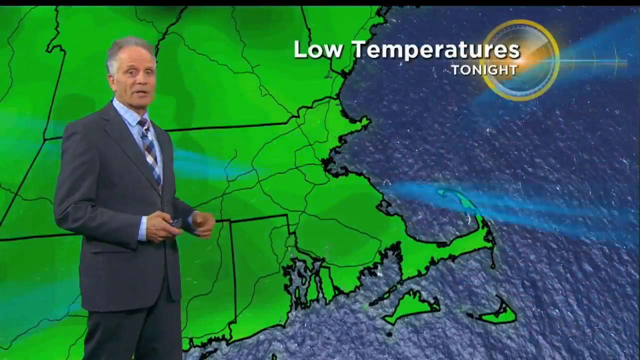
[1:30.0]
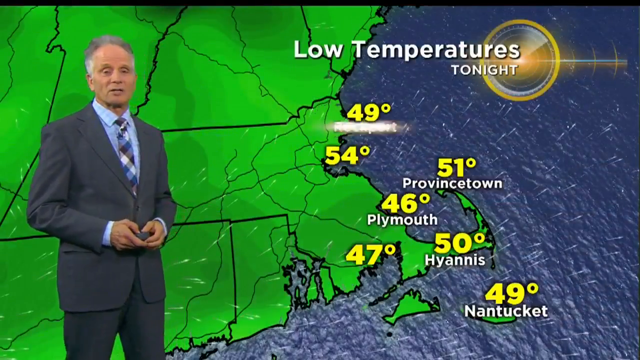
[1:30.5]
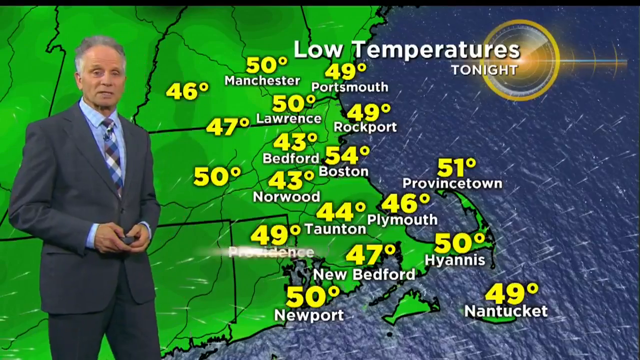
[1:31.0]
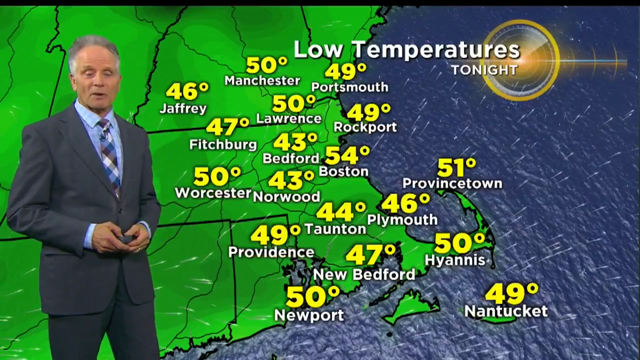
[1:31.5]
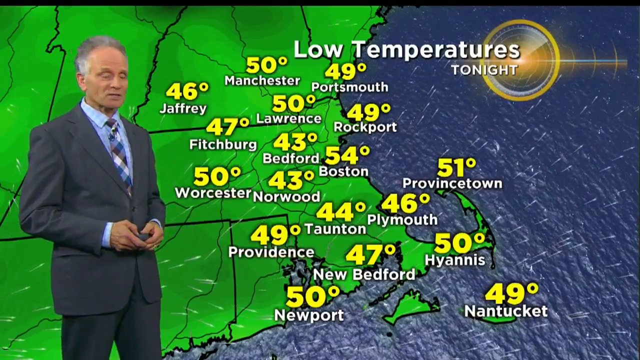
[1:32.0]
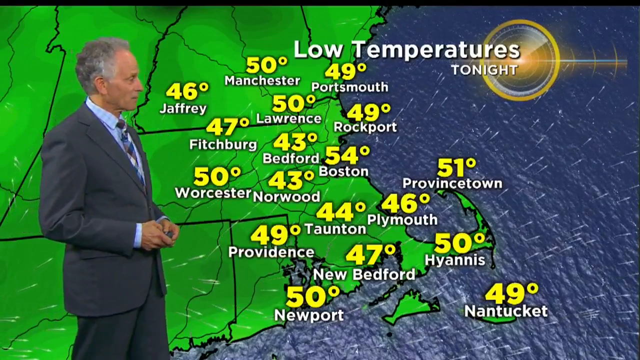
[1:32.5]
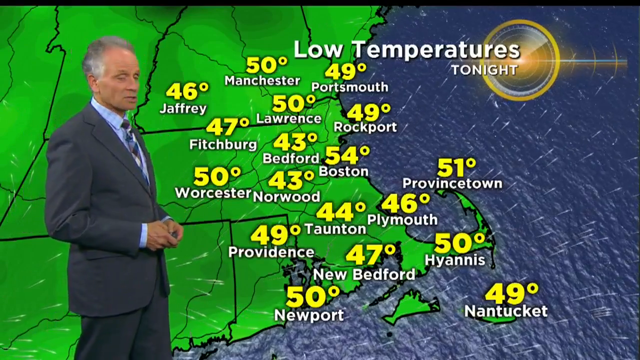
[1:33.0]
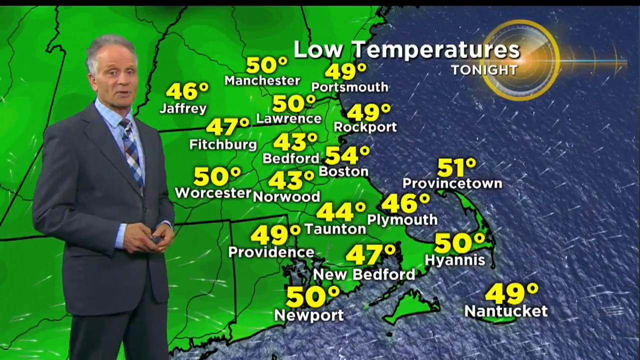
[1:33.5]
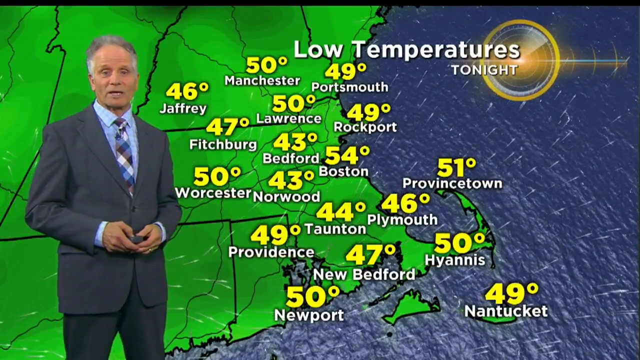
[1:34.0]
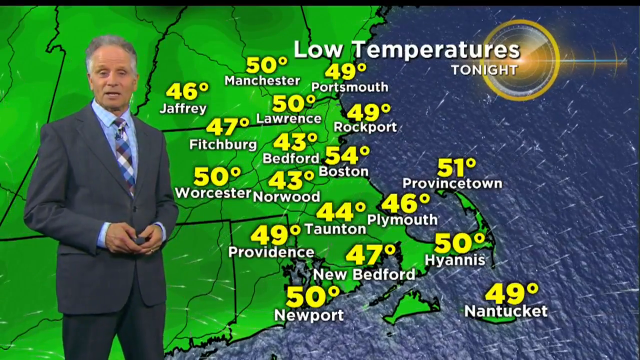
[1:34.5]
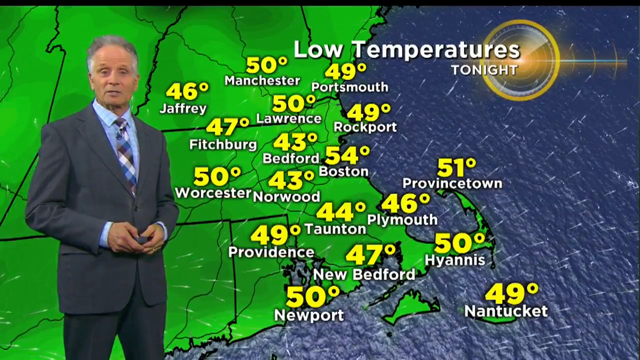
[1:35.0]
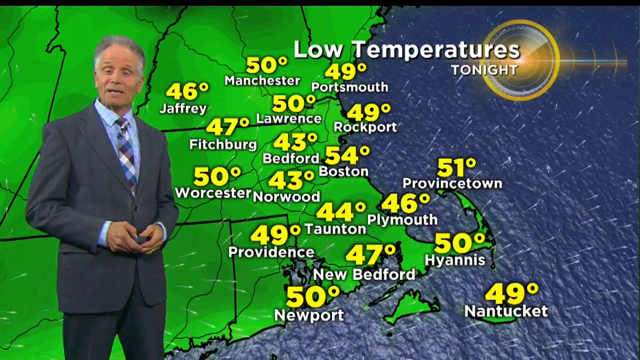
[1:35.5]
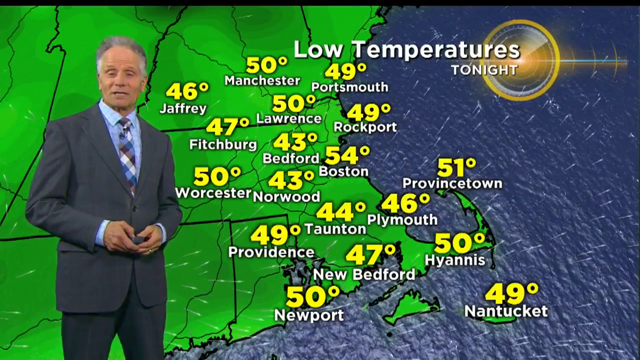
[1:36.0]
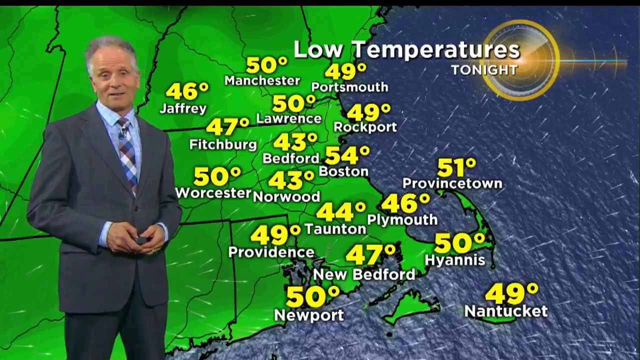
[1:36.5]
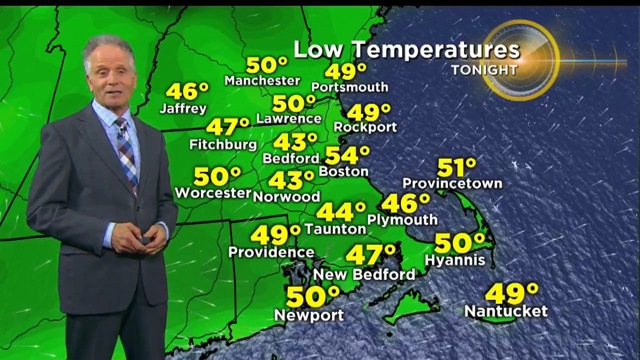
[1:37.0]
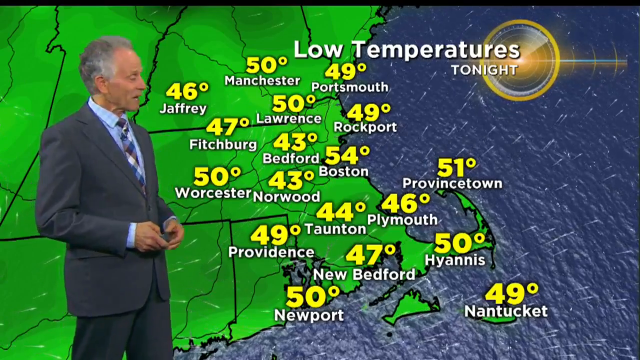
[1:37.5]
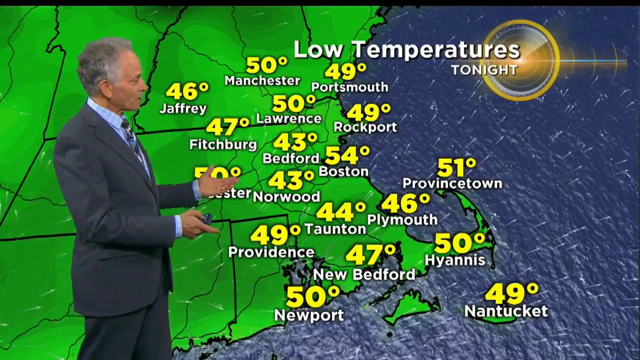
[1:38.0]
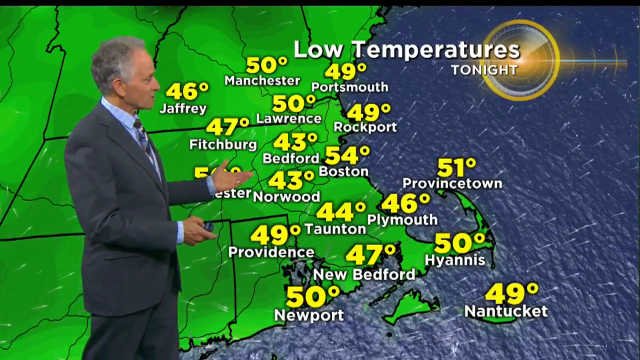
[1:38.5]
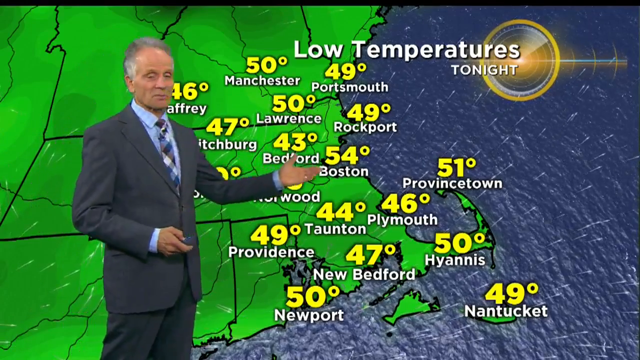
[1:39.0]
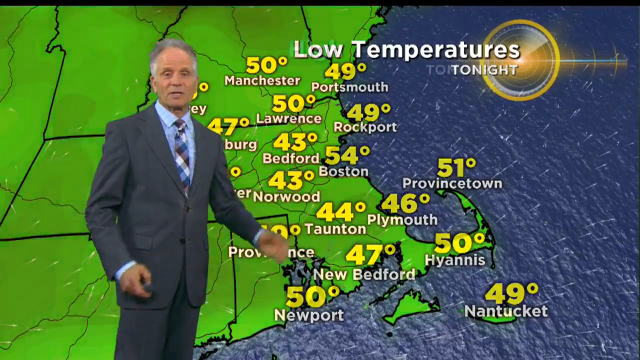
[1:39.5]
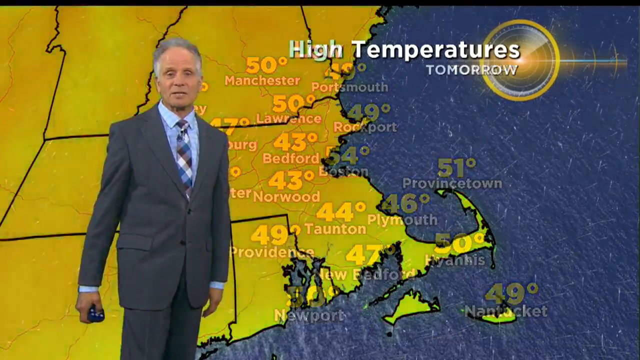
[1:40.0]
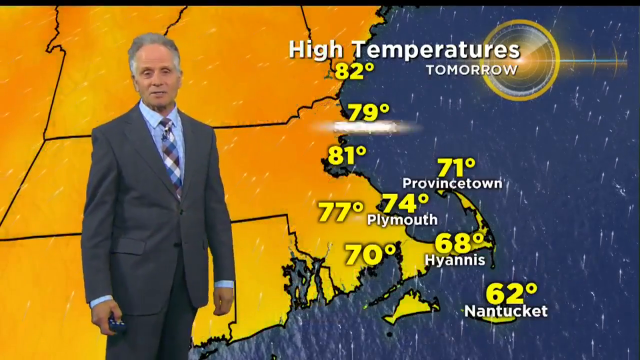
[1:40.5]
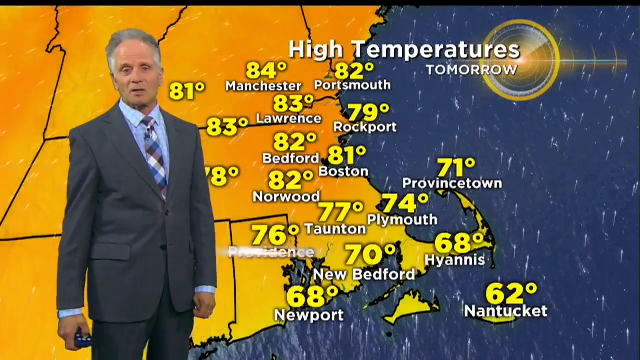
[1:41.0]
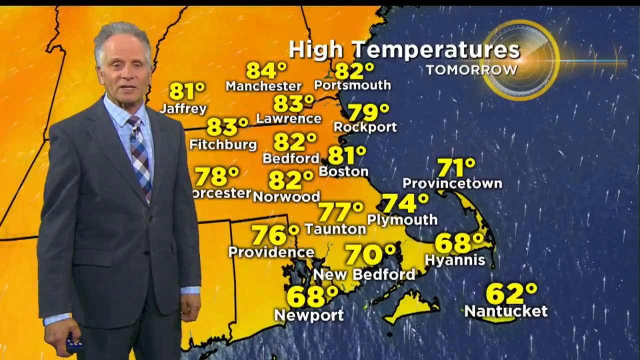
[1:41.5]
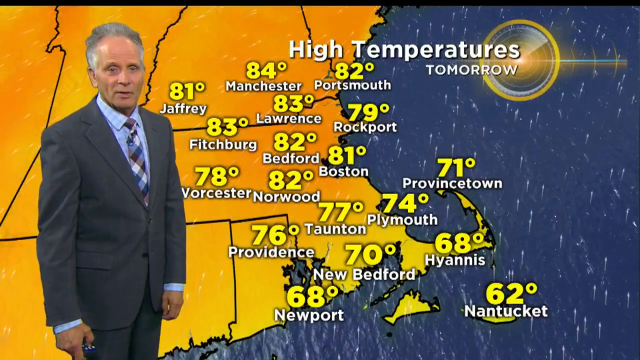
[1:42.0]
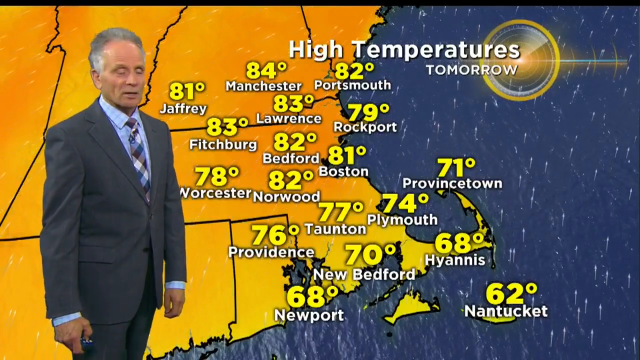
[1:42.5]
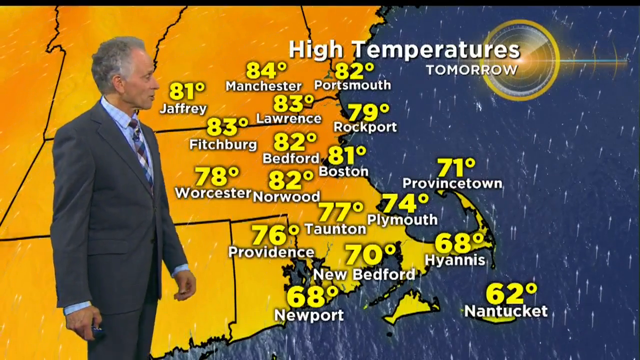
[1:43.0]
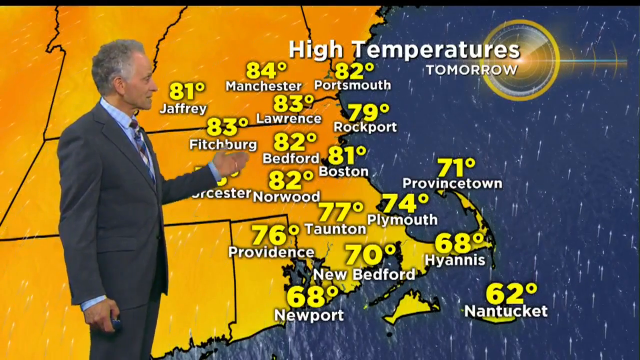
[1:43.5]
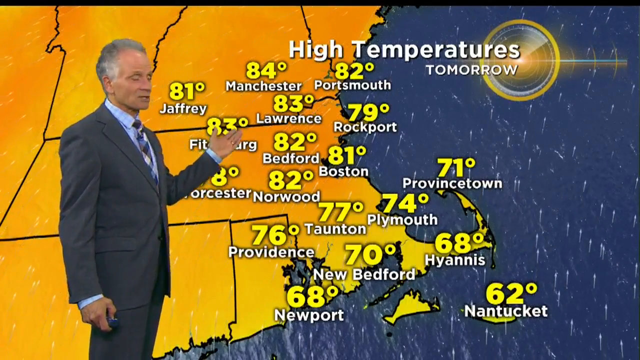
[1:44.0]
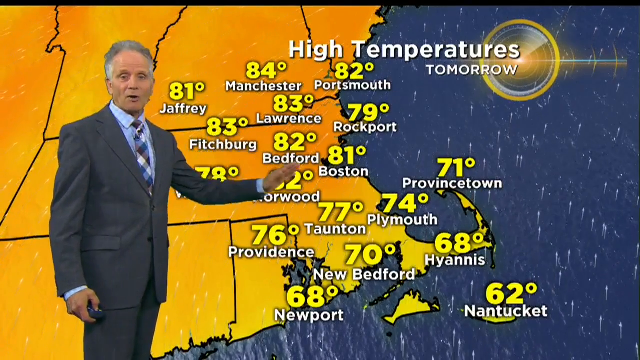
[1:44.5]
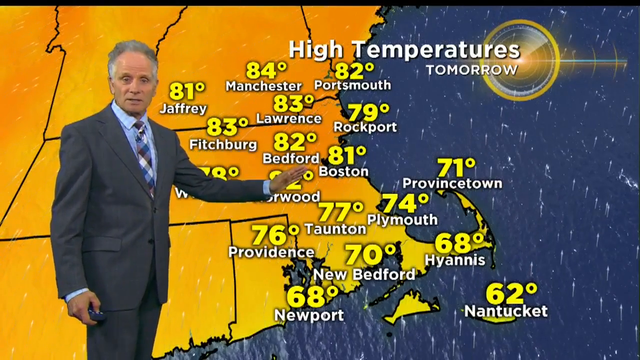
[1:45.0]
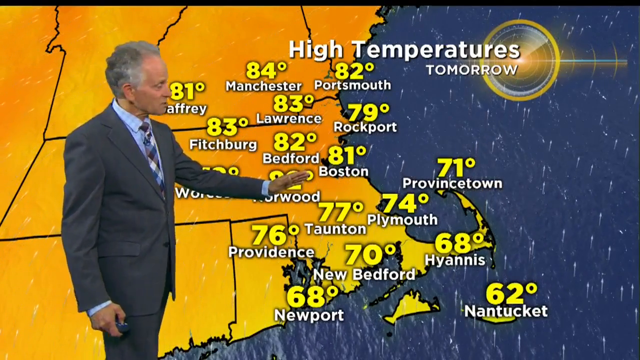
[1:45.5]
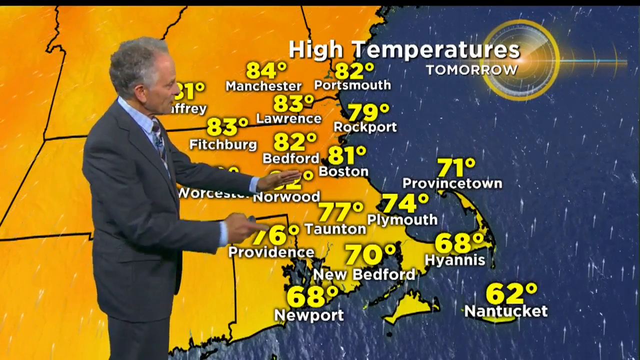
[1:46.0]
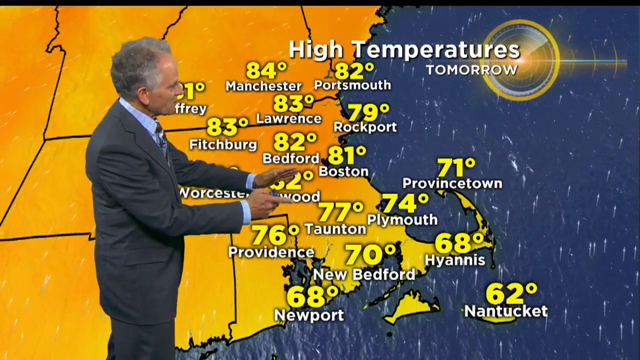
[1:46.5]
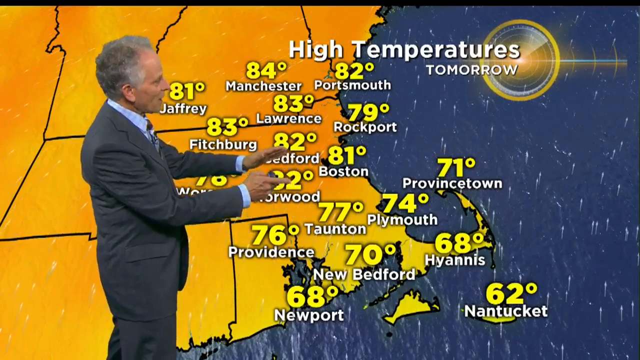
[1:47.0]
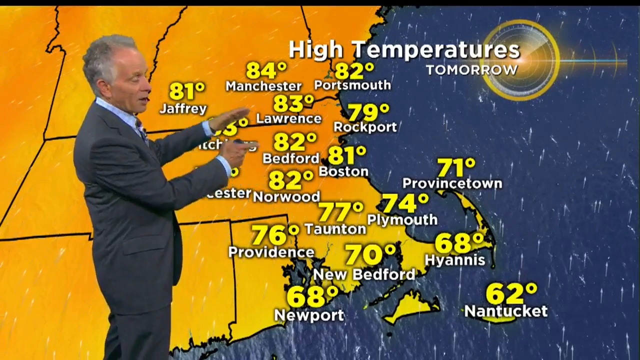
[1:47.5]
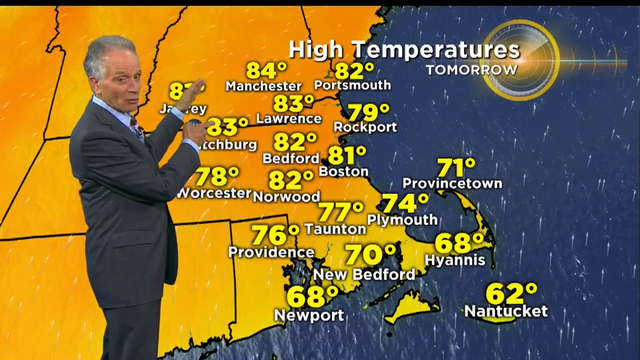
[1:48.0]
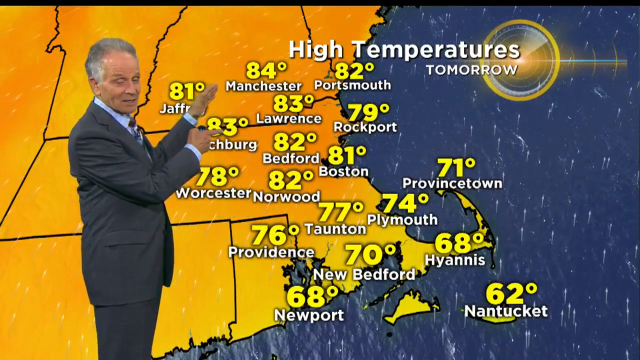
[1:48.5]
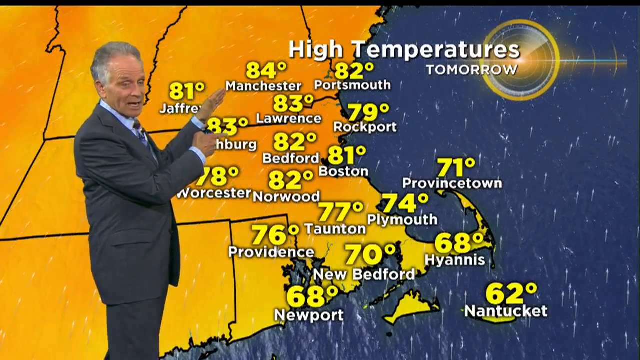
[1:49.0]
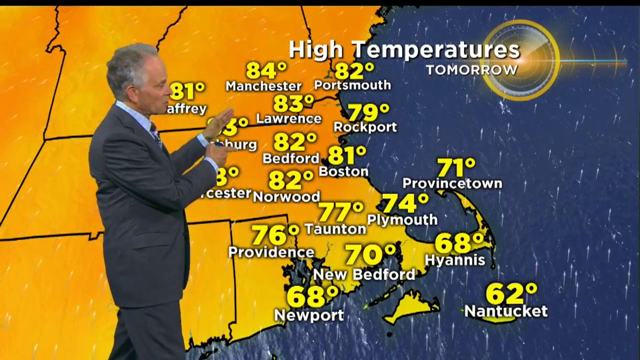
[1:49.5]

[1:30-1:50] A new screen shows green states in the upper east of the country with blue going through them and ocean to the right. At the top it reads "low temperatures tonight", with a circle or disk behind the text. The meteorologist is to the left in a gray suit, light blue shirt and checkered tie, with gray hair, talking. Temperatures for the states around the Boston area appear in yellow, and little white dots head to the east. He continues talking, and then a new screen turns a sort of yellow-orangey color and reads "high temperatures tomorrow", listing high temperatures in different cities around the Boston area. He is turned to the side, pointing, and moving his hands up and down across the map.